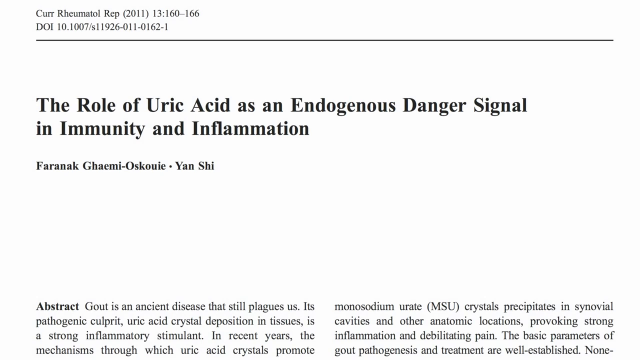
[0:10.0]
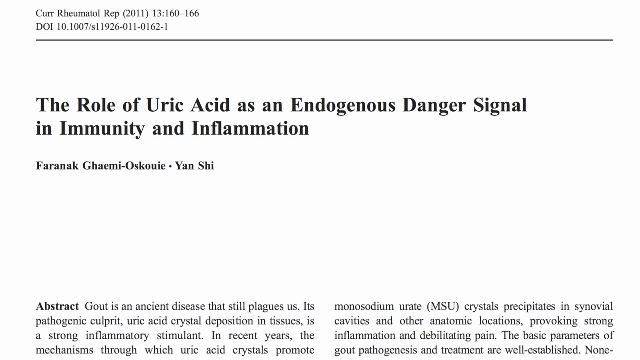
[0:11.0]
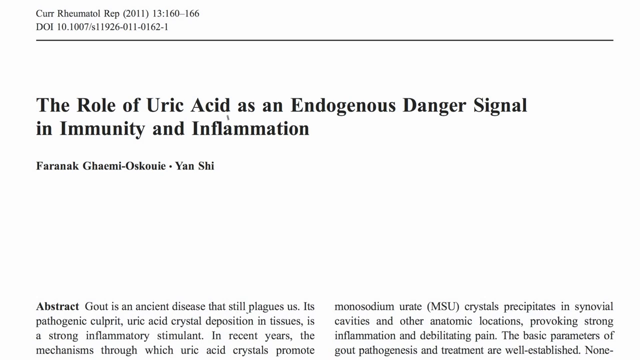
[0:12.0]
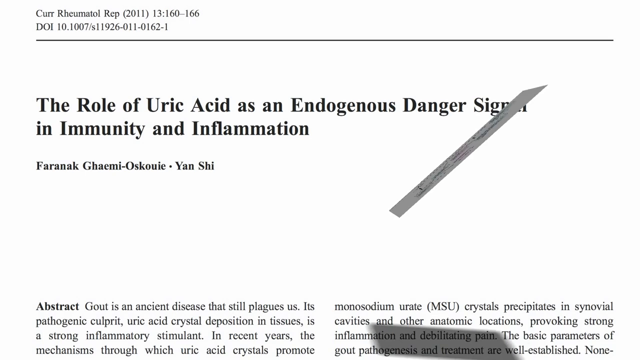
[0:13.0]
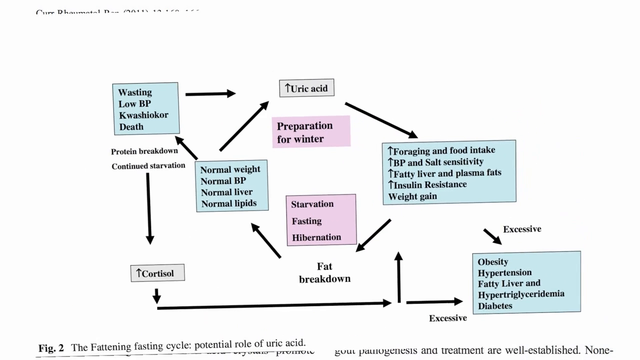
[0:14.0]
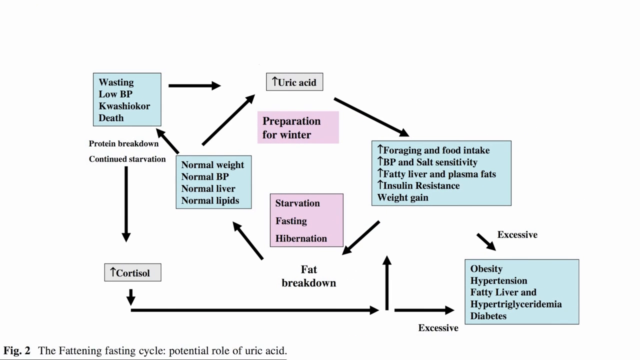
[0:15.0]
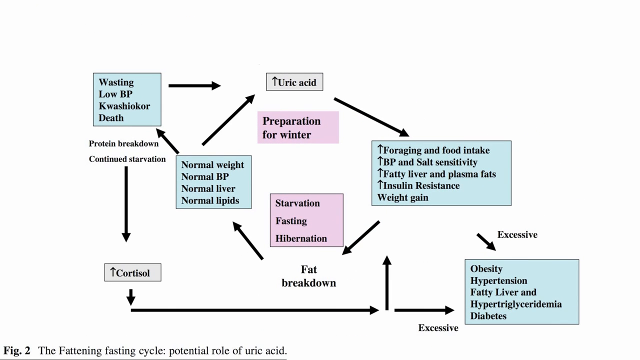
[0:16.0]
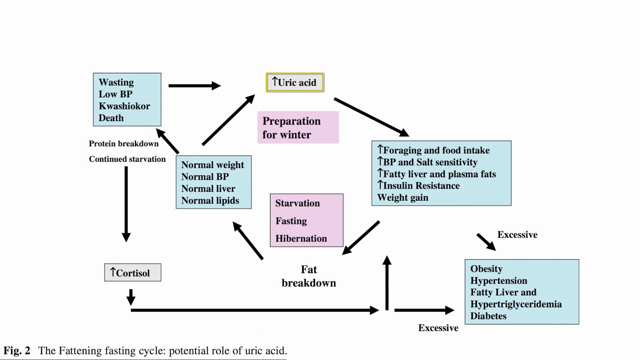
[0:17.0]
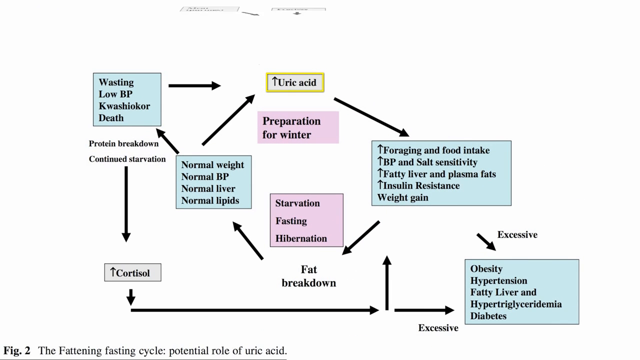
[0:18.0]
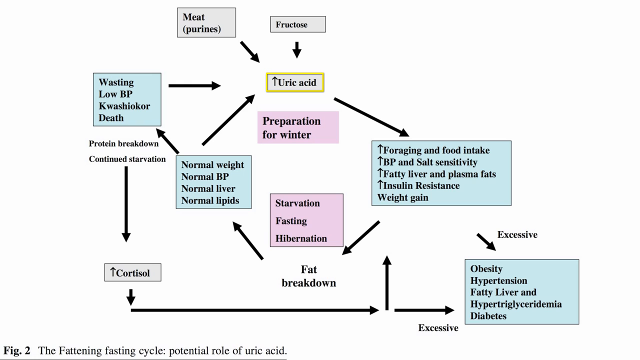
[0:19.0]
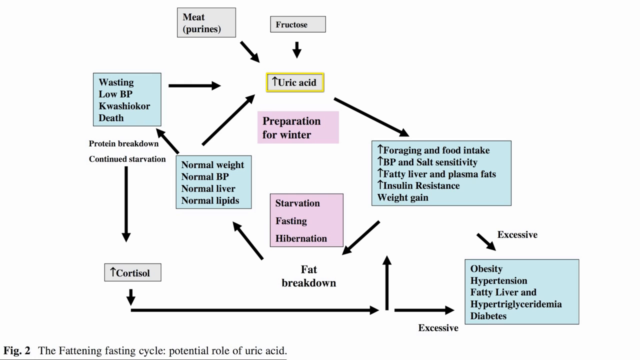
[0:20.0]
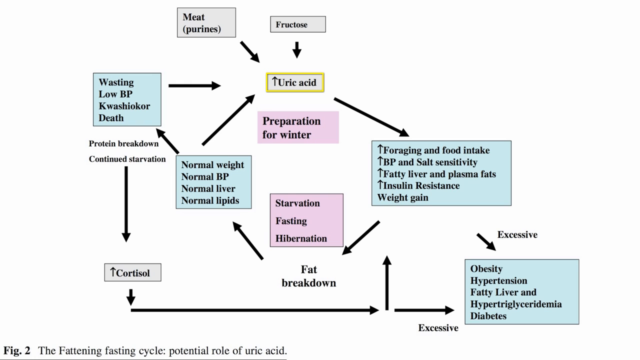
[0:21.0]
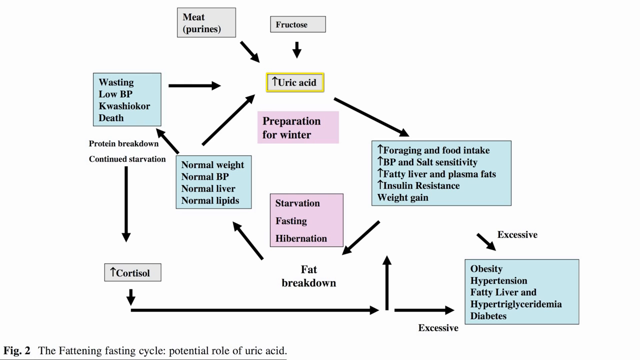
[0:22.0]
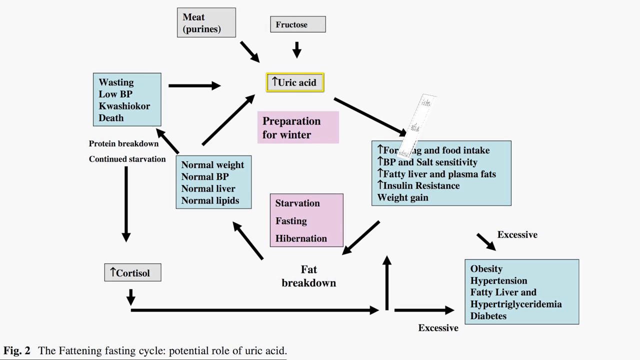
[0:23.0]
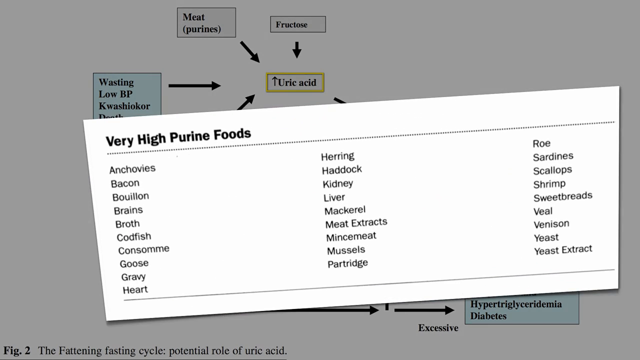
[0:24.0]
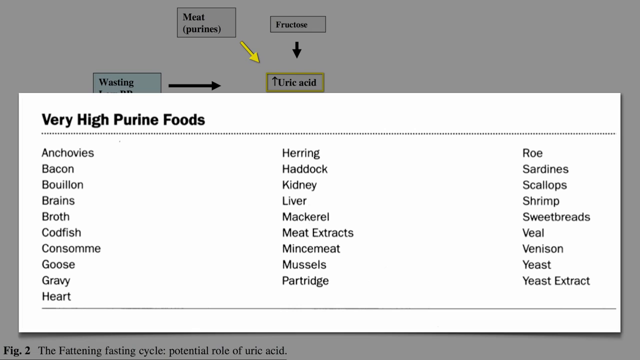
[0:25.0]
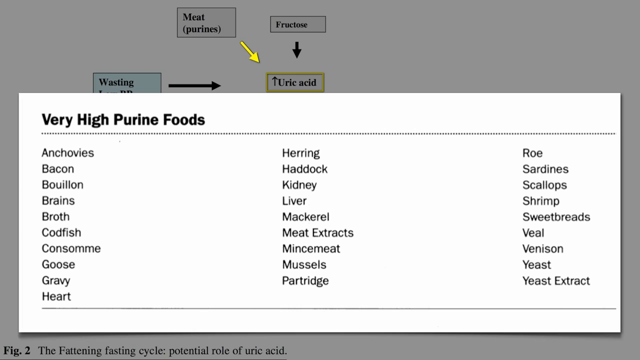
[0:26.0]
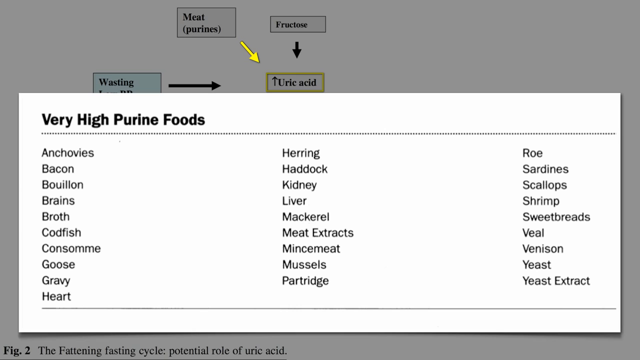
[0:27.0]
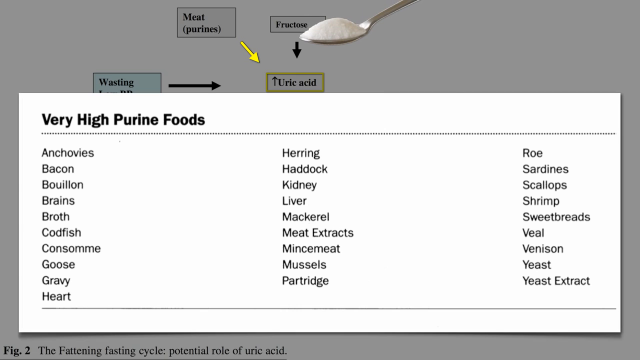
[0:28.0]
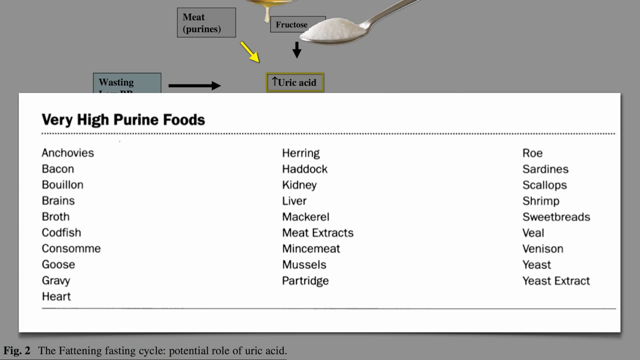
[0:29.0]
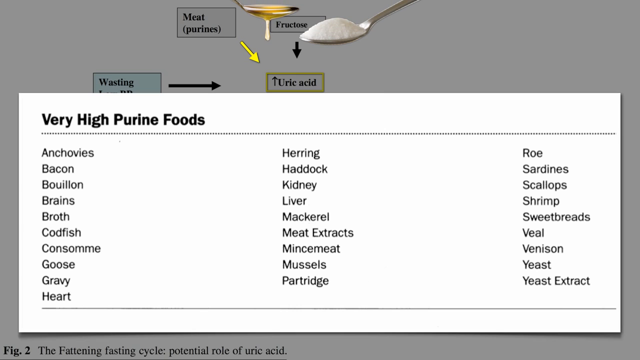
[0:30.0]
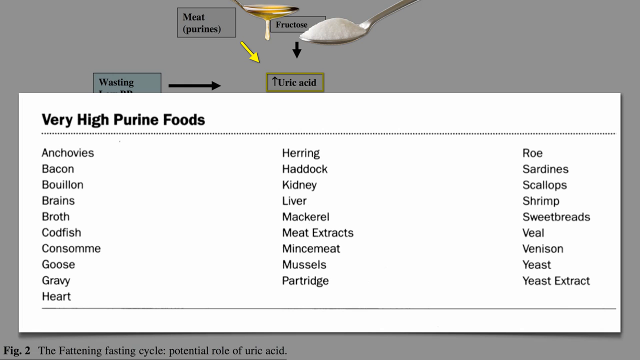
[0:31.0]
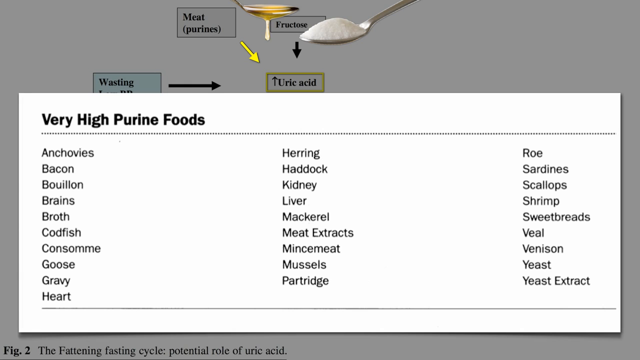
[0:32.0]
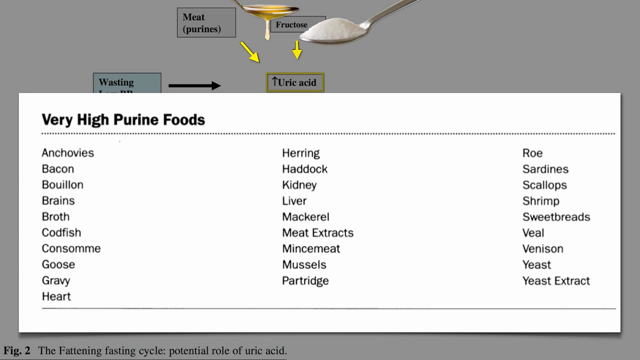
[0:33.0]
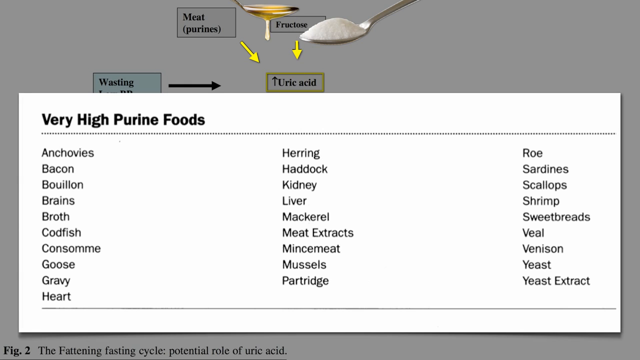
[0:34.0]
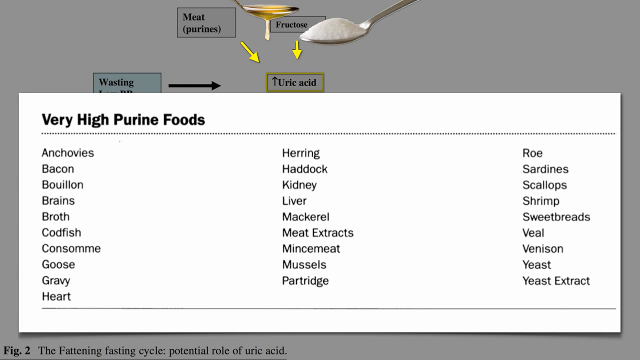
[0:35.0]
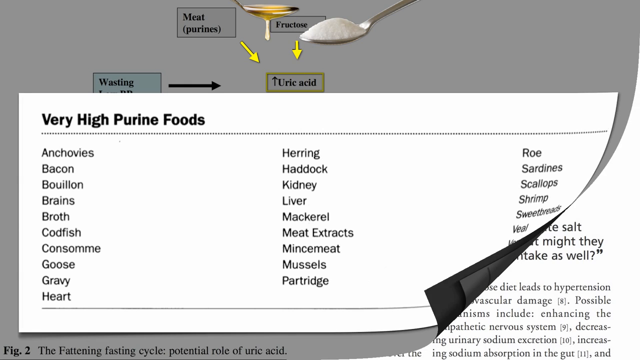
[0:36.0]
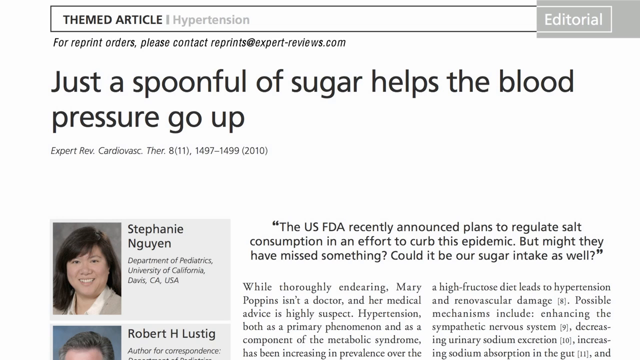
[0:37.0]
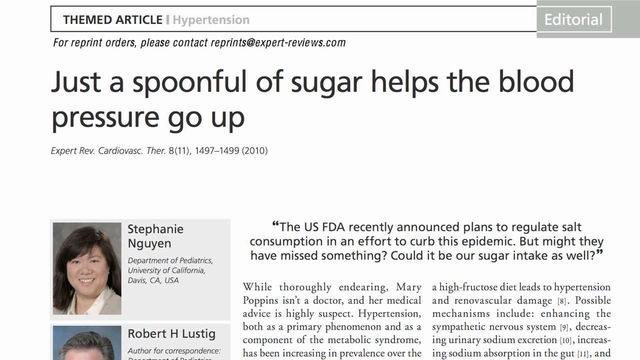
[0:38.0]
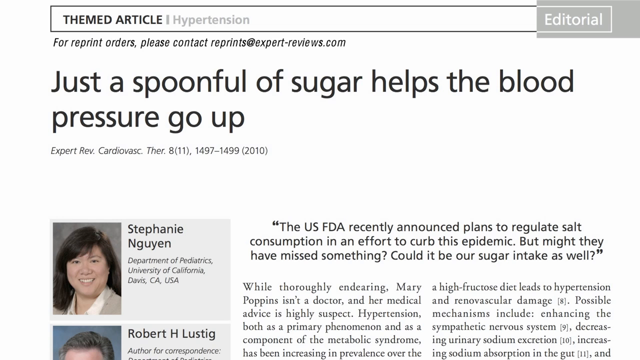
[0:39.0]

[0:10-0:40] On a white background, black letters read "the role of uric acid in an endogenous danger signal in immunity and inflammation," with two names below it. Then a white background pops up with what looks to be some sort of chart made of boxes in blue, pink and white, with arrows pointing between them so that they seem to go around and connect to one another. Each box has something written on it: "wasting," "low BP," "preparation for winter," "uric acid," "normal weight" and "normal BP," going all the way down to "excessive," "obesity," "hypertension," "fatty liver" and "high triglycerides." A yellow box appears on the screen and circles the box that says "uric acid." Two more boxes pop up pointing to the uric acid box, reading "meat, purines" and "fructose." Another page then pops up that says "Very High Purine Foods."